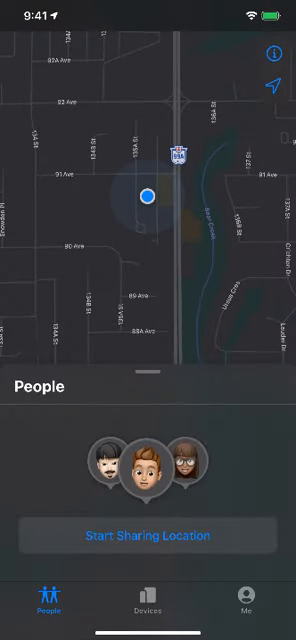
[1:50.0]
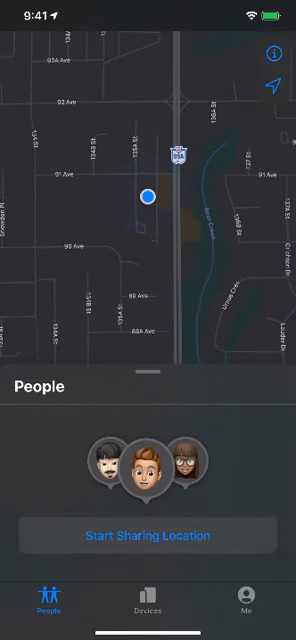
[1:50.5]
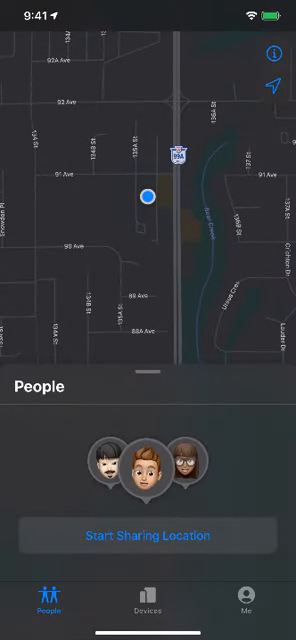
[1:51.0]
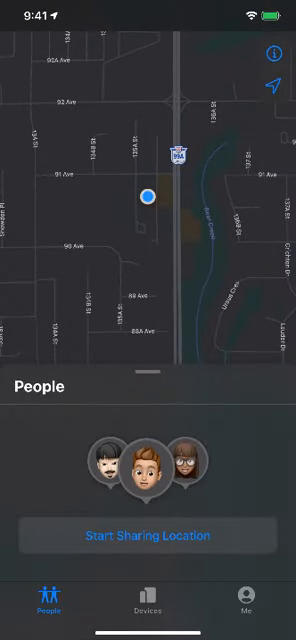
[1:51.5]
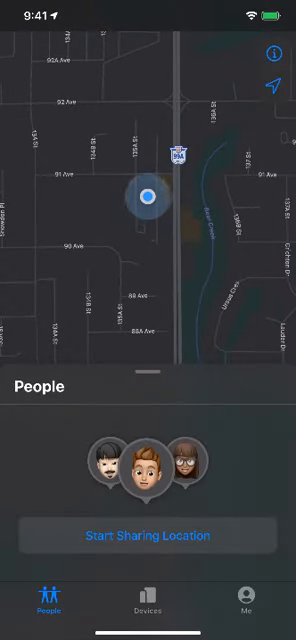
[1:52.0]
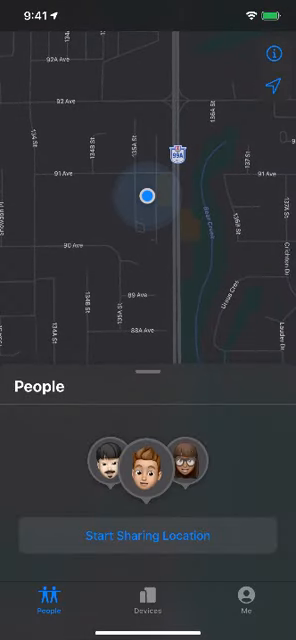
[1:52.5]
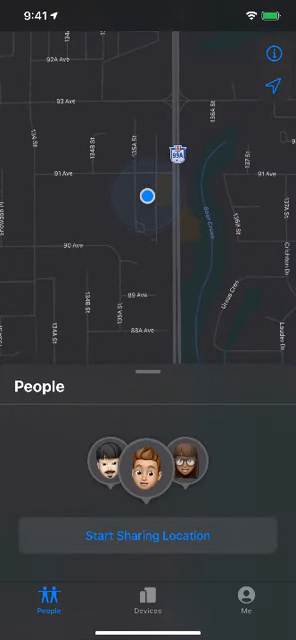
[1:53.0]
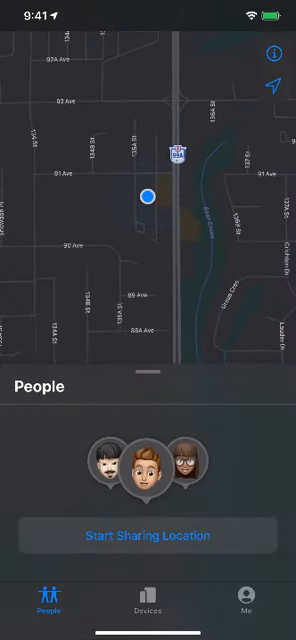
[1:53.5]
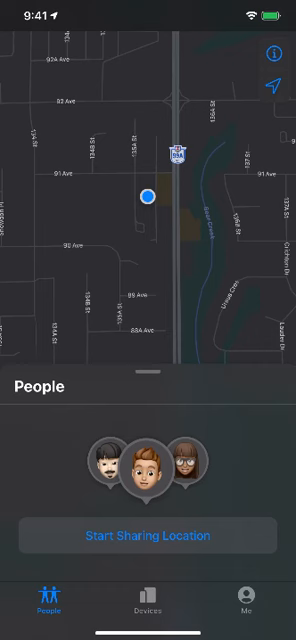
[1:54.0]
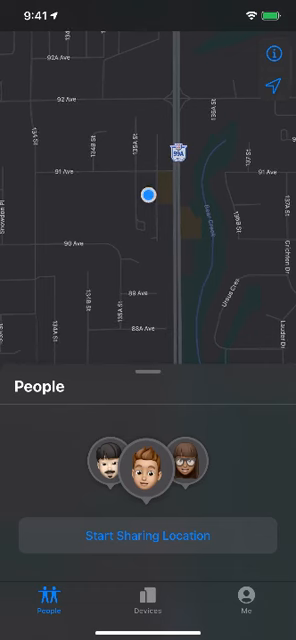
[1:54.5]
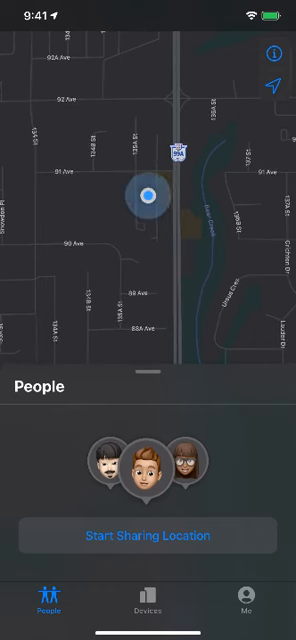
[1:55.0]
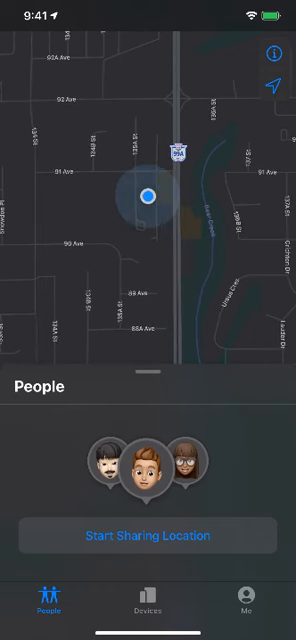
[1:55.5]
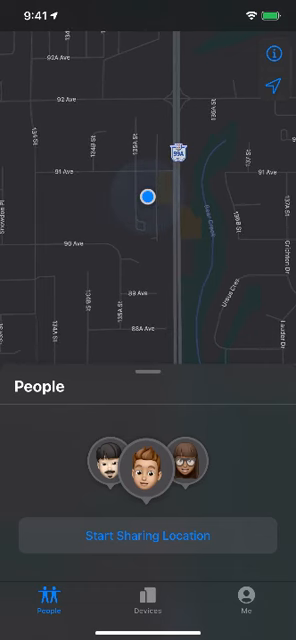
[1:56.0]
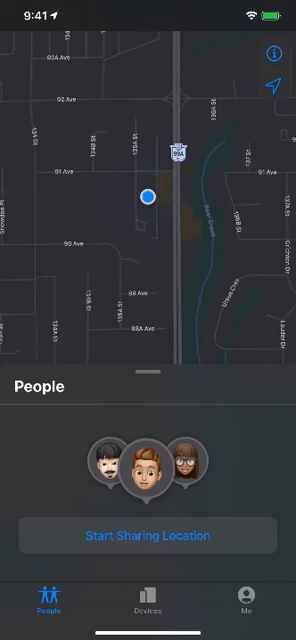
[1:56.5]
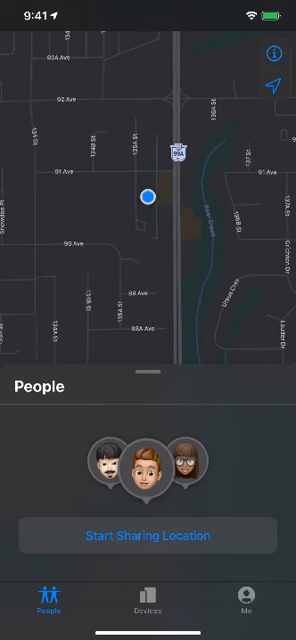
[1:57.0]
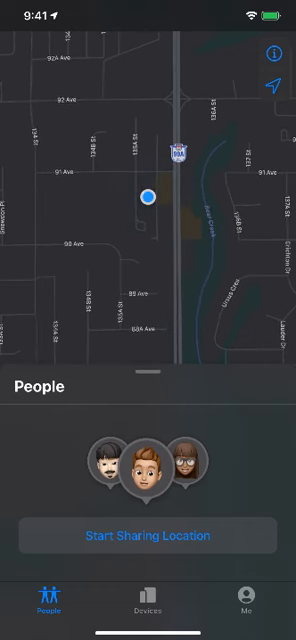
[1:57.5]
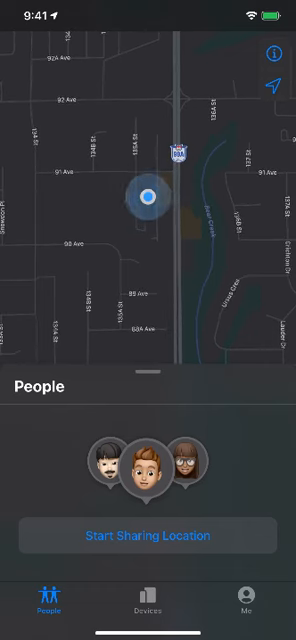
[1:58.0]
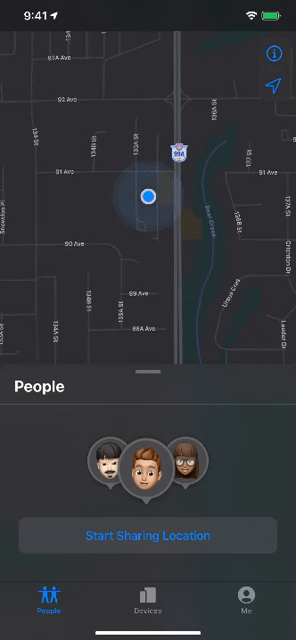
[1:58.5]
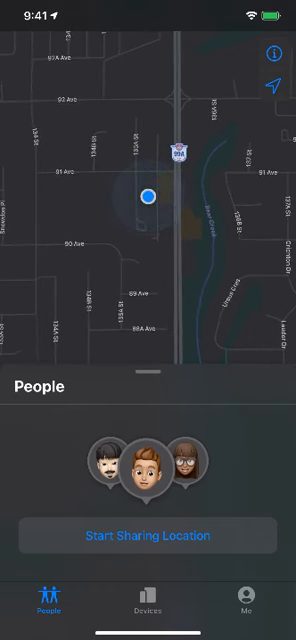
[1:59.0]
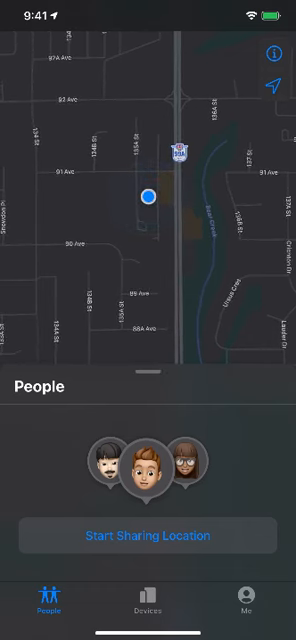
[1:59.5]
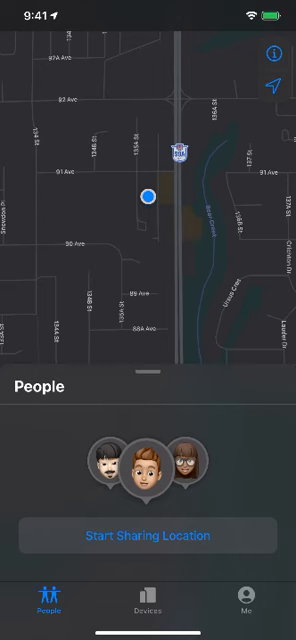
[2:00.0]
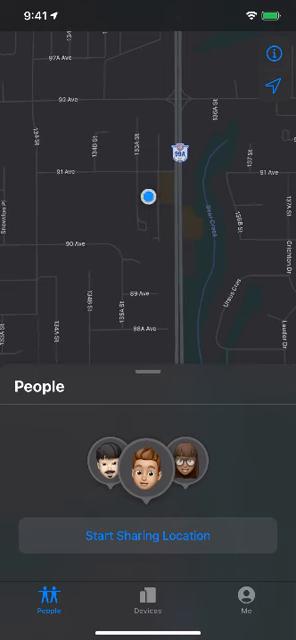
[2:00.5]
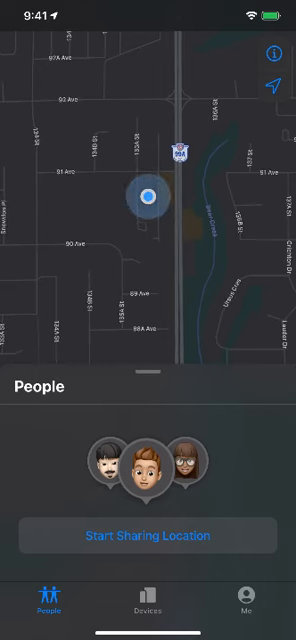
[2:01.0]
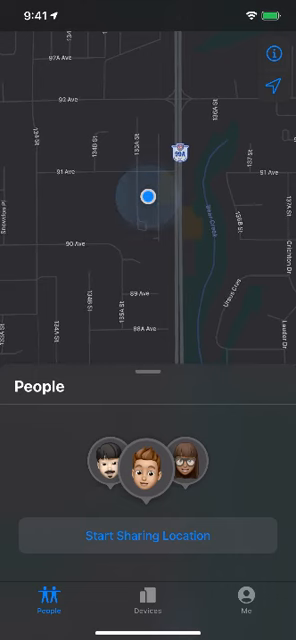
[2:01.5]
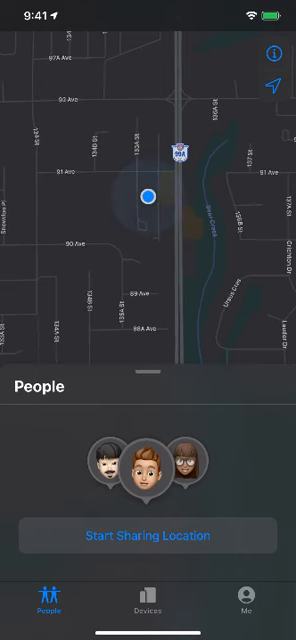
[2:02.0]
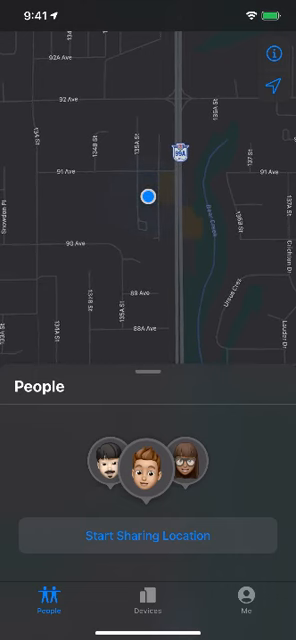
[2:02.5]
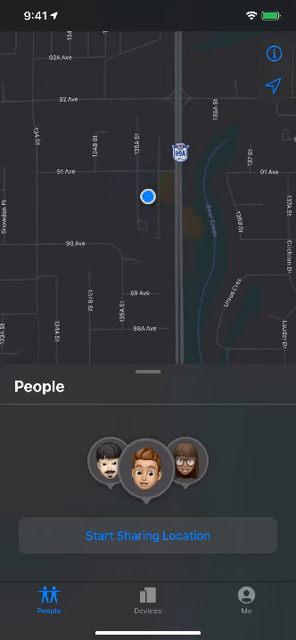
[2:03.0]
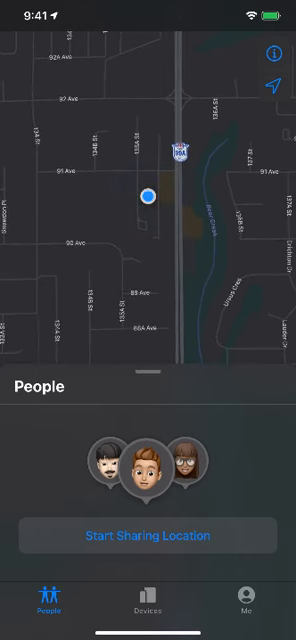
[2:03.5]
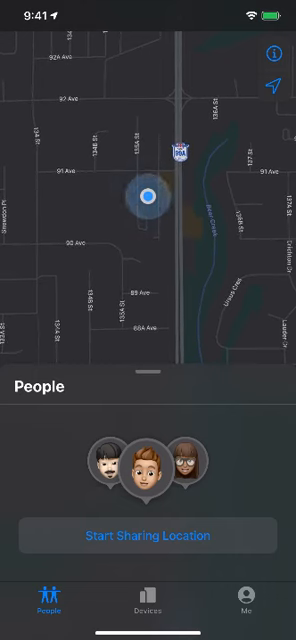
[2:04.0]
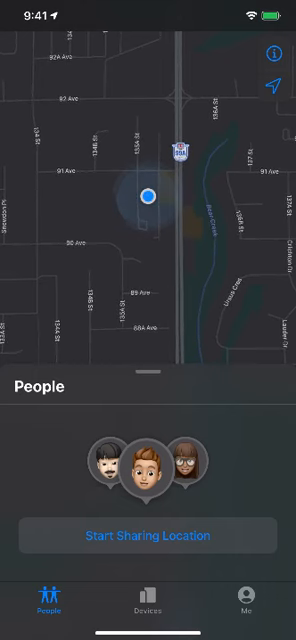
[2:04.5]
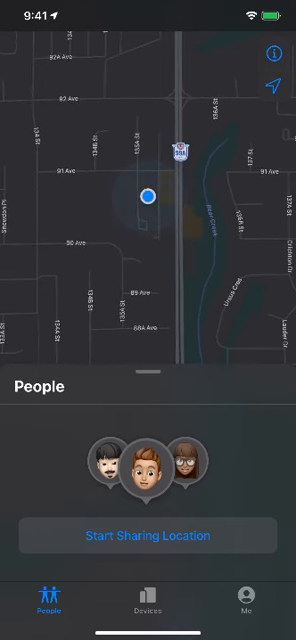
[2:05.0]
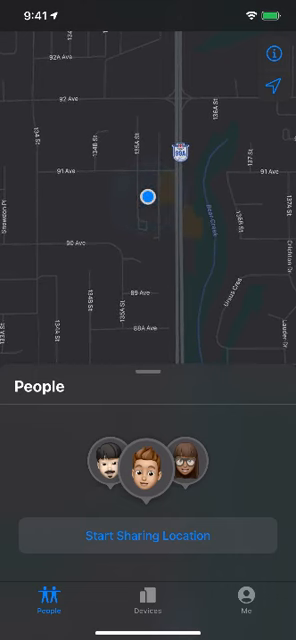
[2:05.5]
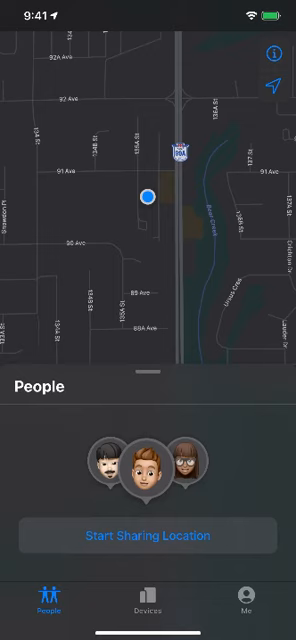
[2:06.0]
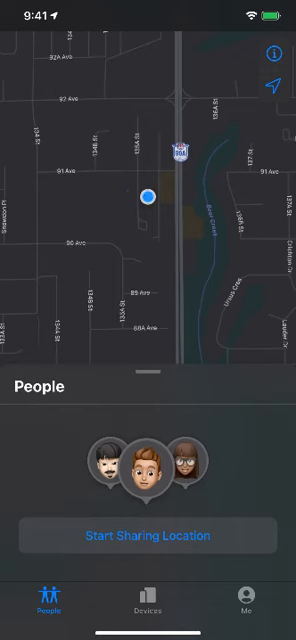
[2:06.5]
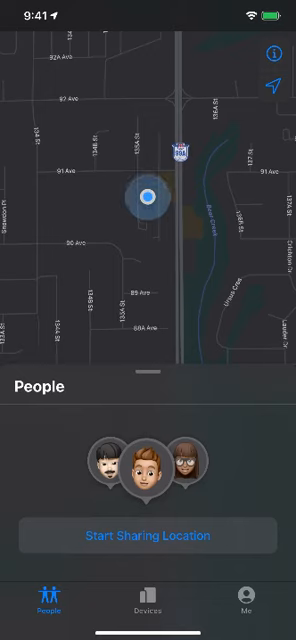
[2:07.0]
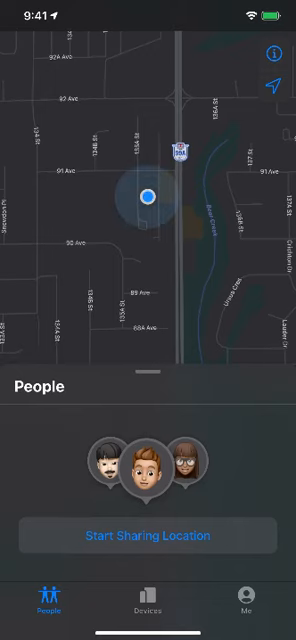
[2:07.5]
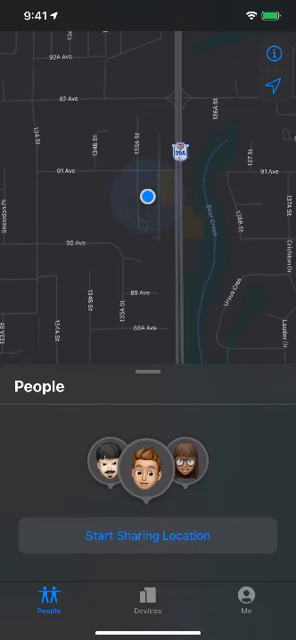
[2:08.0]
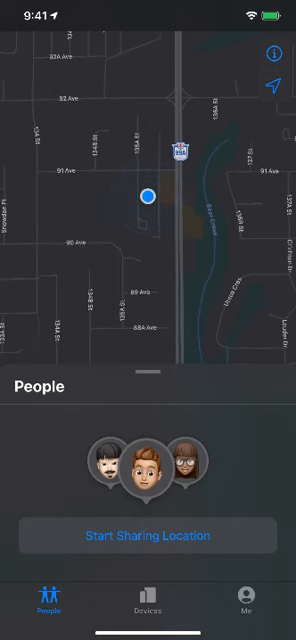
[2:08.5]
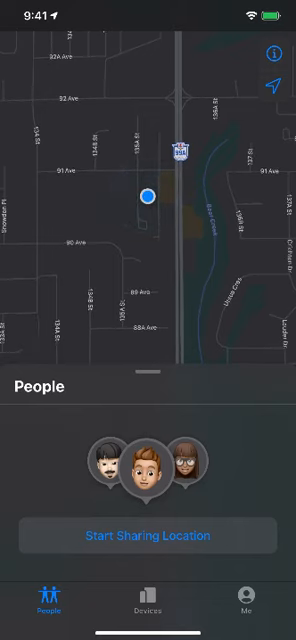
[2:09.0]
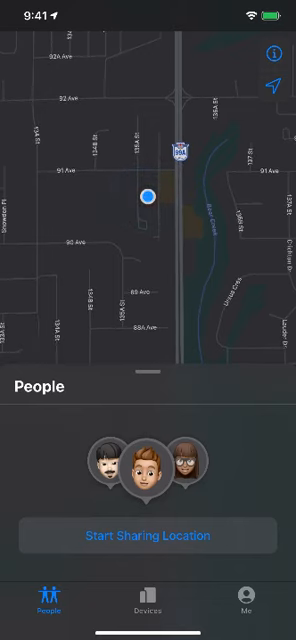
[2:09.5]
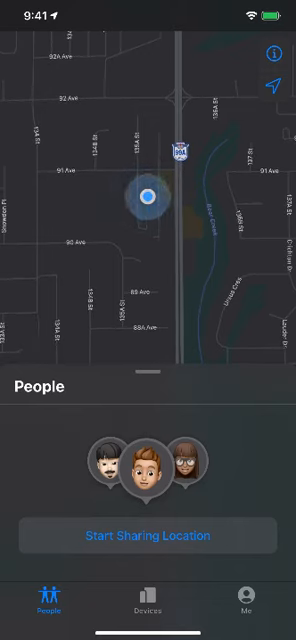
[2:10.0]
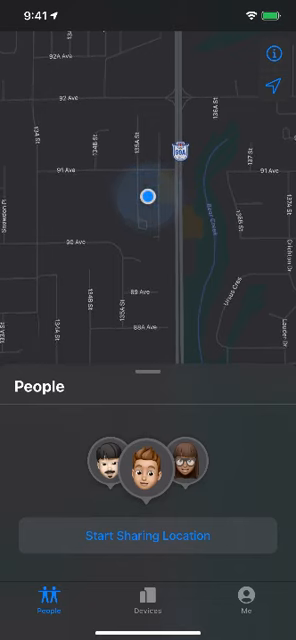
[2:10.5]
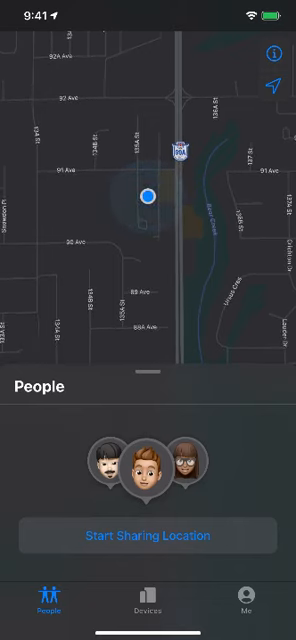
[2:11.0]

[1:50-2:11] The smartphone screen recording shows the time 9:41 at the top left. A blue dot is on a suburban-type street next to a highway, and occasionally a blue light pings off the dot. At the very bottom is a menu reading "people" with a large button in blue text reading "start sharing location". Underneath are three buttons: one pictures the outlines of two people and is labeled "people", the second reads "devices" and the third reads "me". The screen stays like this for some time. Above the start sharing location button in the people menu are three 3D renders of people's heads: on the left a man with a black haircut, black goatee and black mustache; in the center a man with brown brushed-back hair; and on the far right a woman with shoulder-length brown hair wearing glasses.